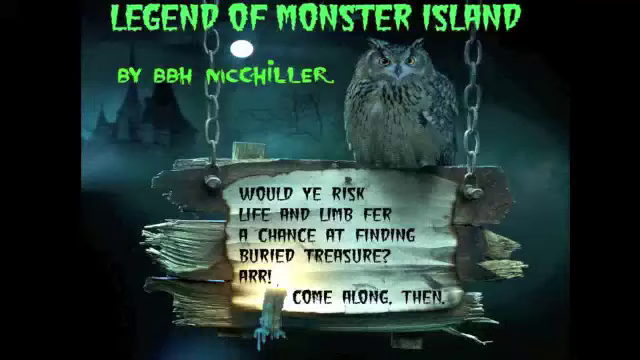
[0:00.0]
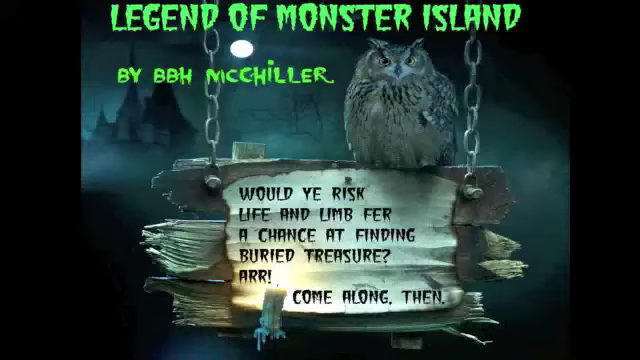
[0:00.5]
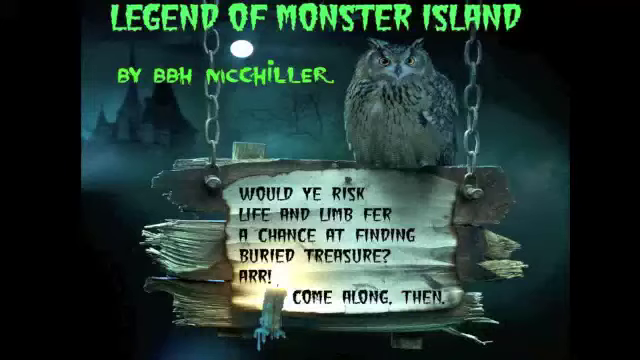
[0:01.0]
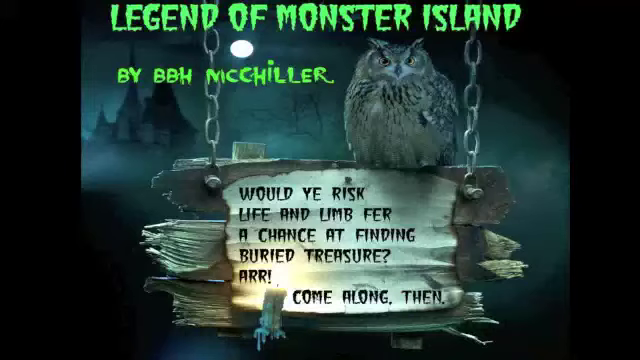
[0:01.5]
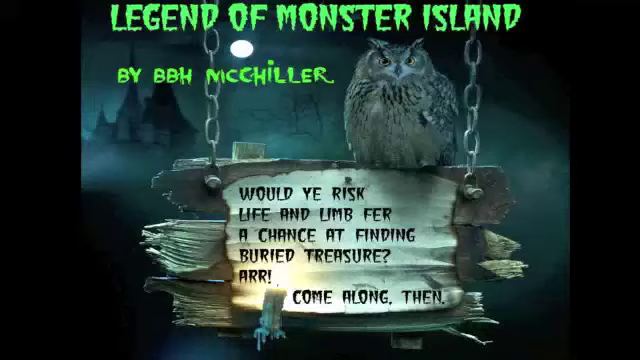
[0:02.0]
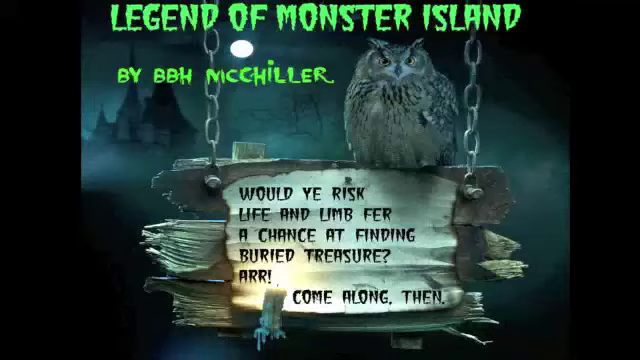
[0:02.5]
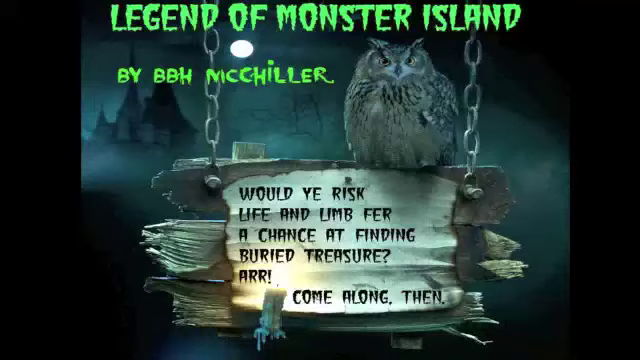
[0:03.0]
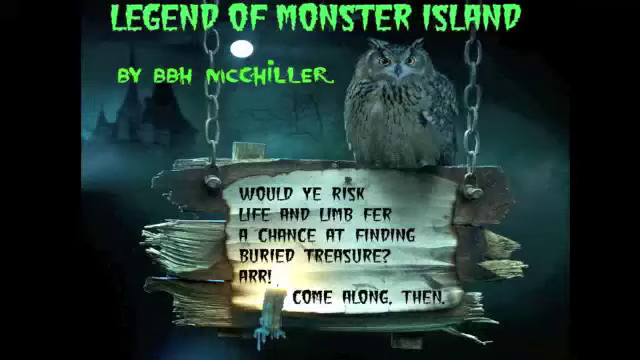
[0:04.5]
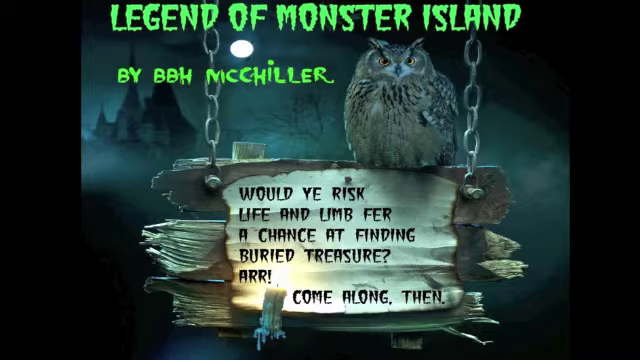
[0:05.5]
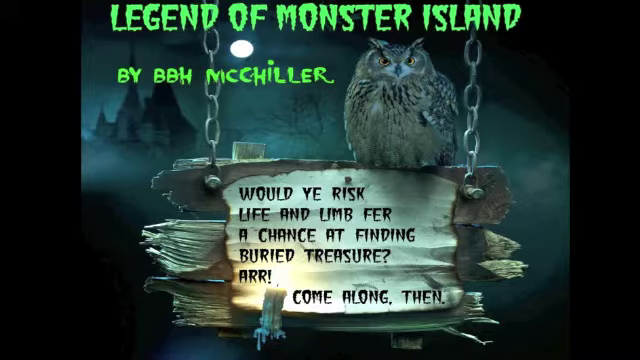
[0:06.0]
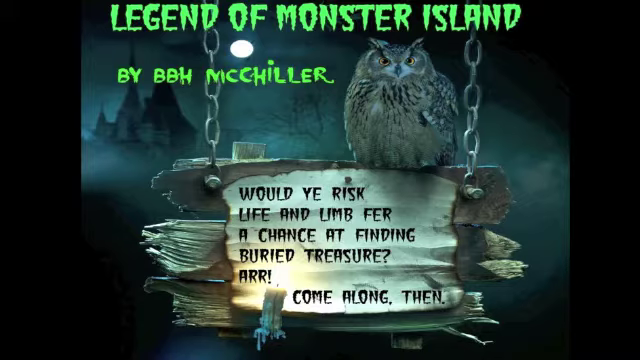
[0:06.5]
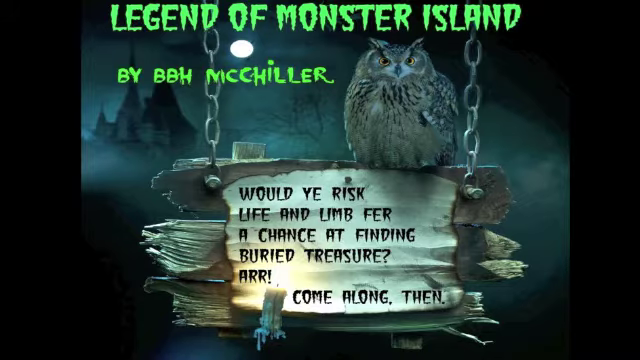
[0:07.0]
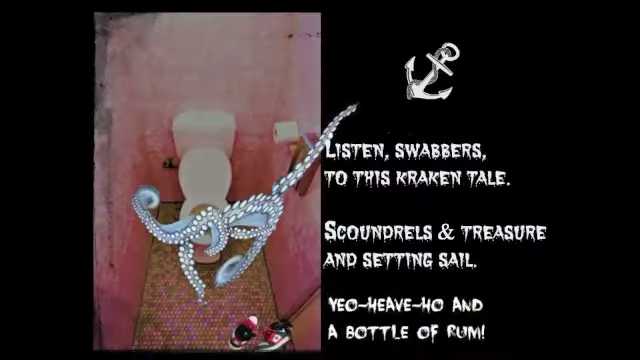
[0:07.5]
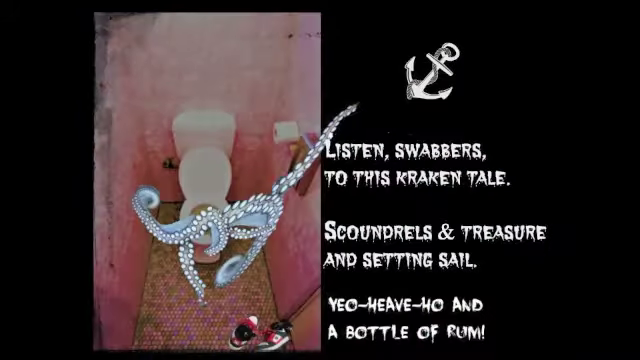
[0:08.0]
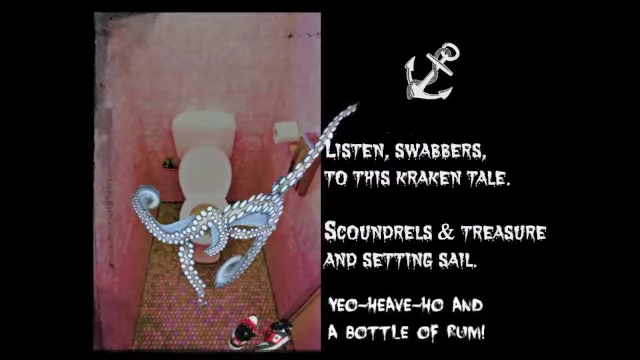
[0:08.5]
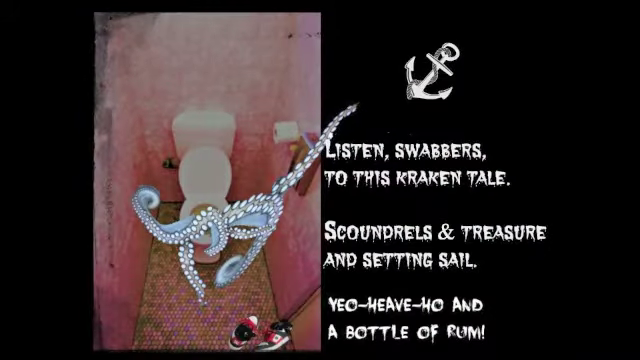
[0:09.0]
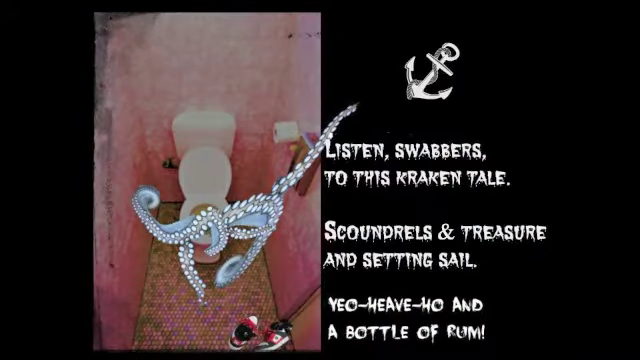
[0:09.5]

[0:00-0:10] The video opens with a title screen reading "legend of the monster island by bb h mckellar". It shows artwork of an owl against a spooky background, with a haunted mansion behind it to the left, fog, and the moon. The artwork is on top of a signboard held by metallic chains, and underneath the owl is text reading "would ye risk life and limb for a chance", giving it a pirate theme. The video then cuts to an image of what looks like a tentacle coming out of a toilet; the toilet looks like a toy or a small toilet. The tentacle does not seem to be part of the image but looks layered on top, touching the background of the screen. Slightly to the right of the toilet is text in pirate speech that talks about a kraken tail. At the top is a white anchor symbol pointing to the left against the black background.